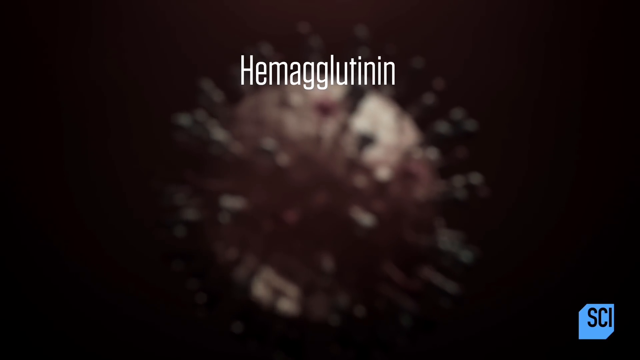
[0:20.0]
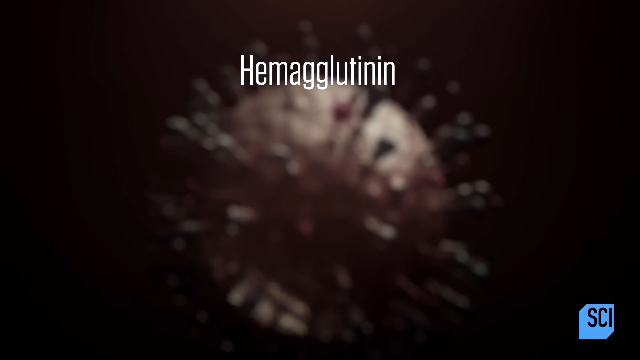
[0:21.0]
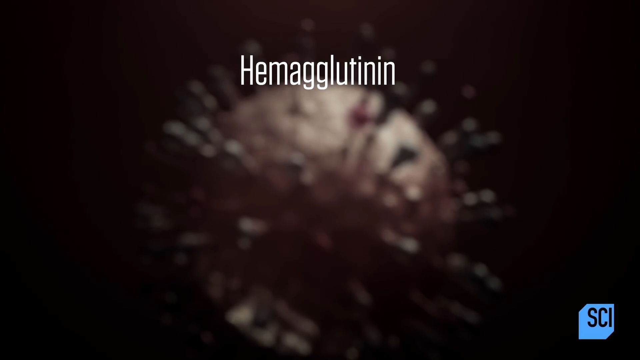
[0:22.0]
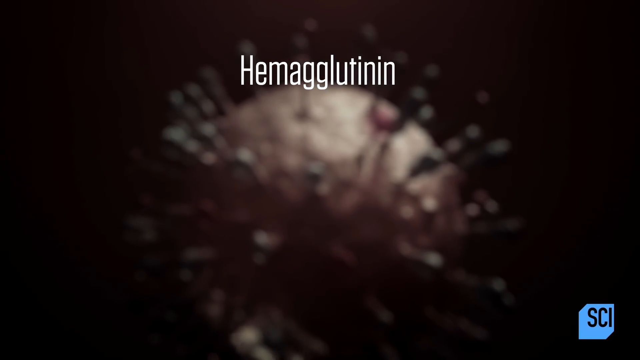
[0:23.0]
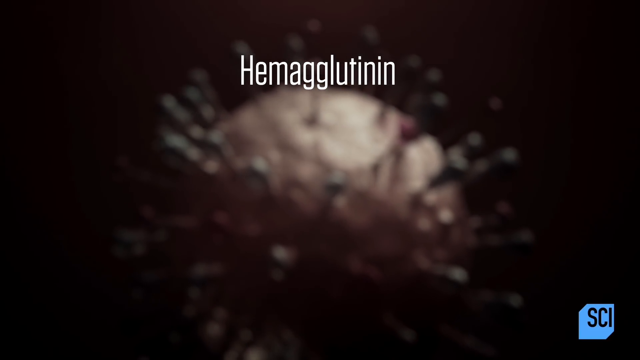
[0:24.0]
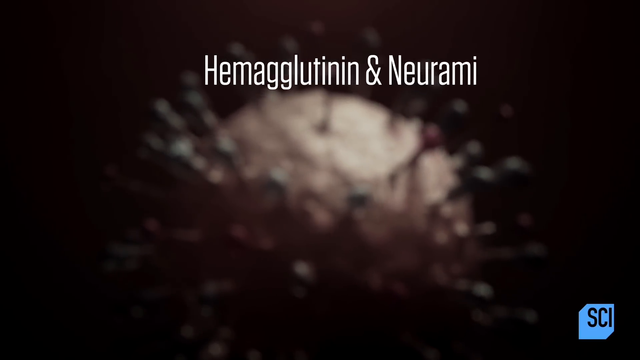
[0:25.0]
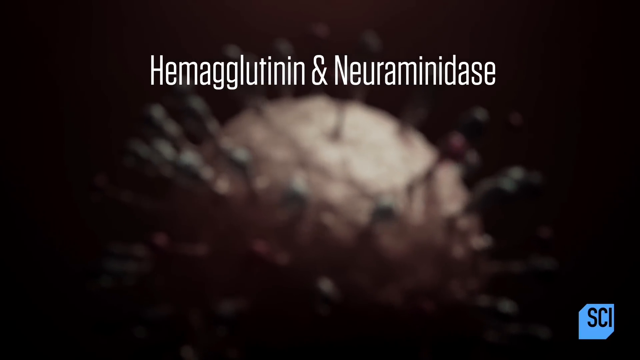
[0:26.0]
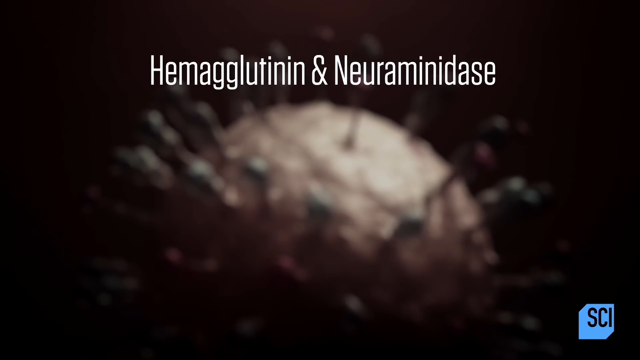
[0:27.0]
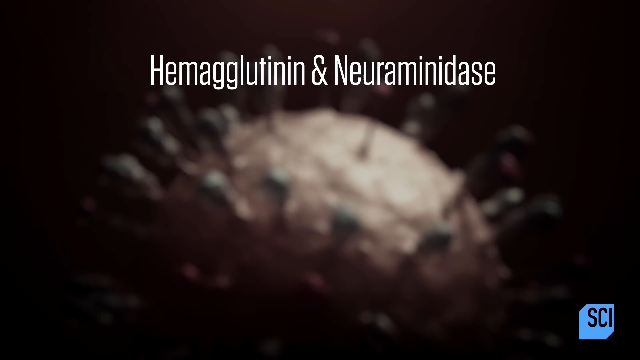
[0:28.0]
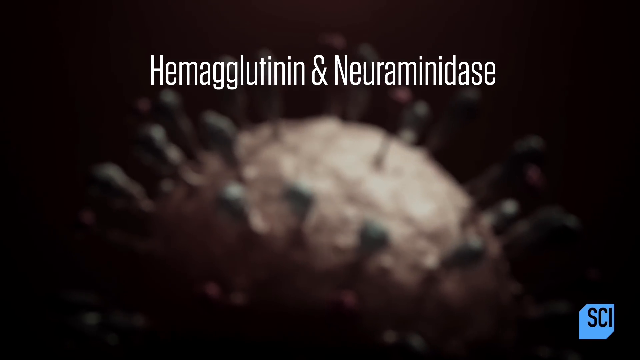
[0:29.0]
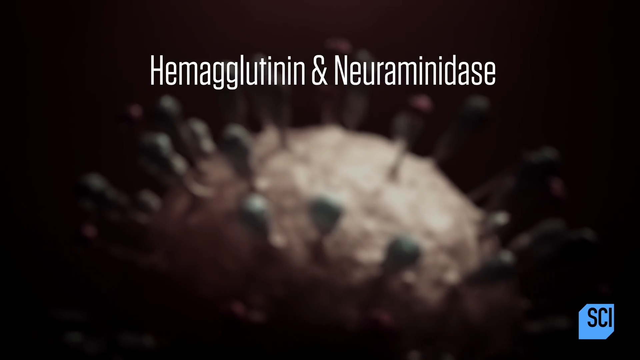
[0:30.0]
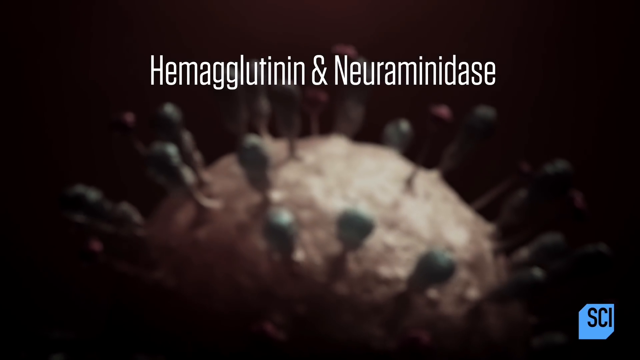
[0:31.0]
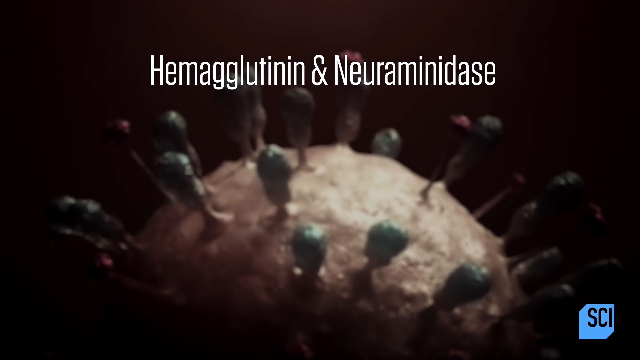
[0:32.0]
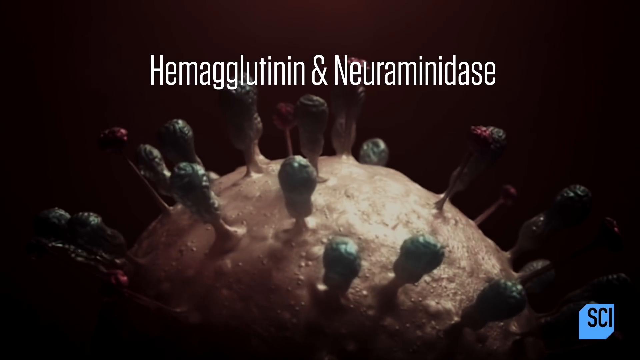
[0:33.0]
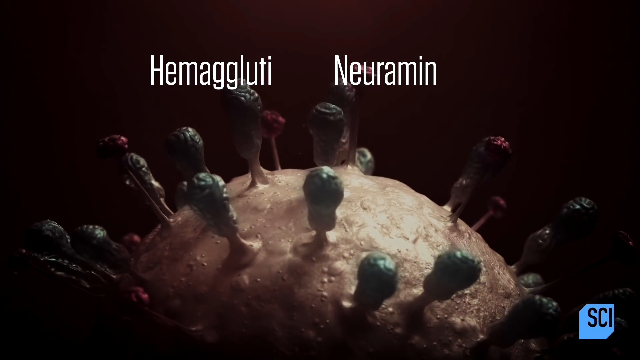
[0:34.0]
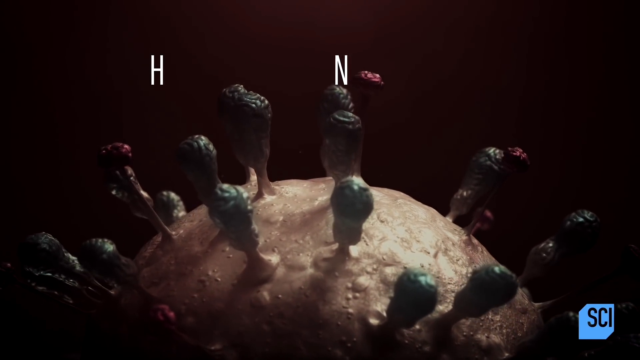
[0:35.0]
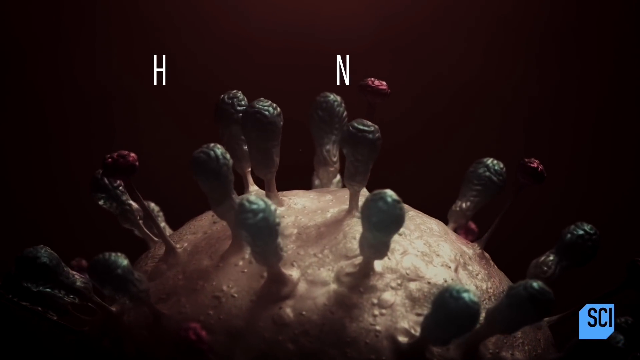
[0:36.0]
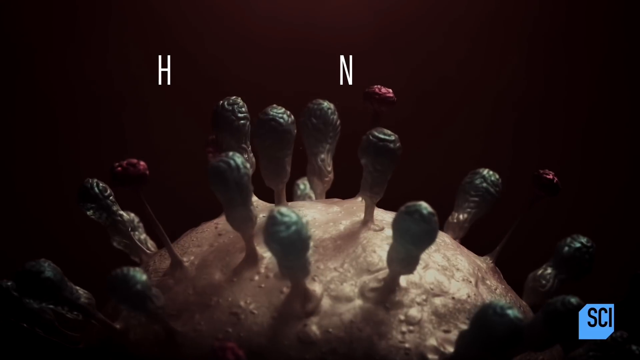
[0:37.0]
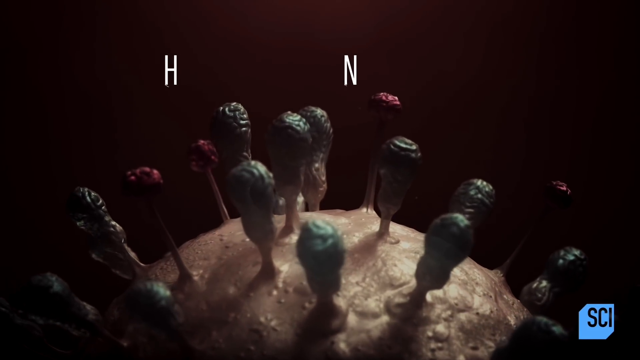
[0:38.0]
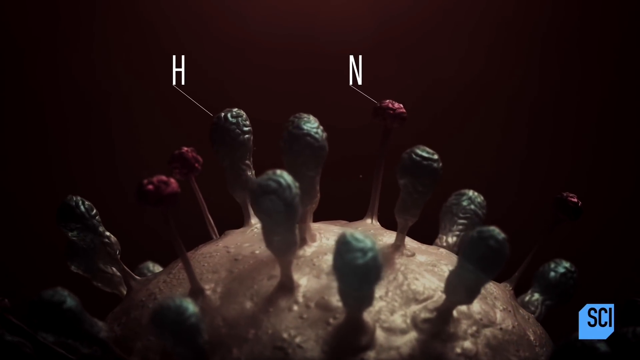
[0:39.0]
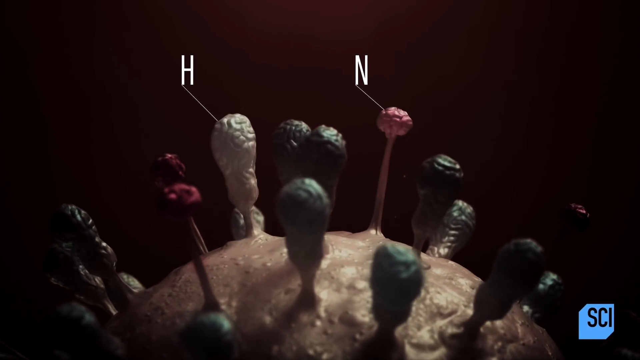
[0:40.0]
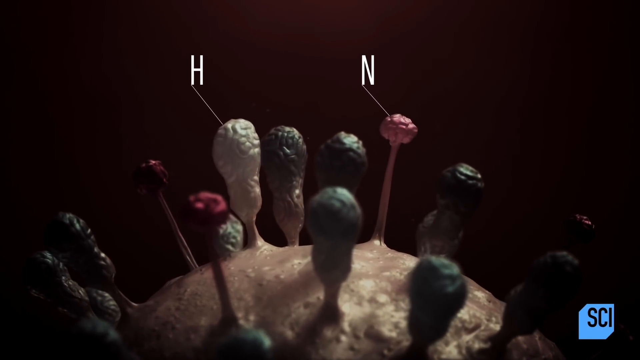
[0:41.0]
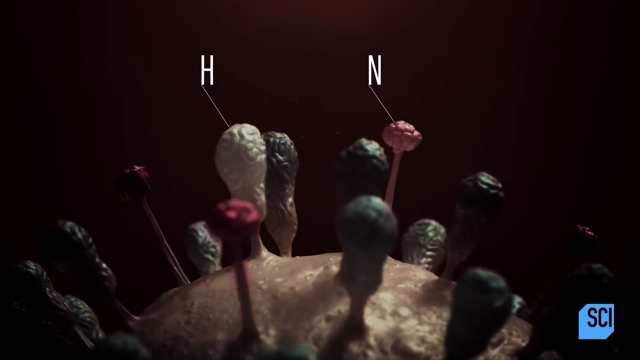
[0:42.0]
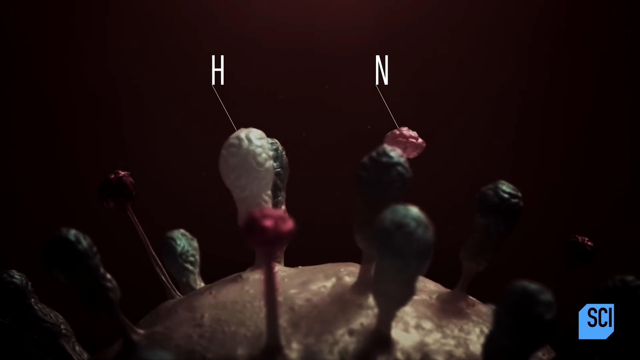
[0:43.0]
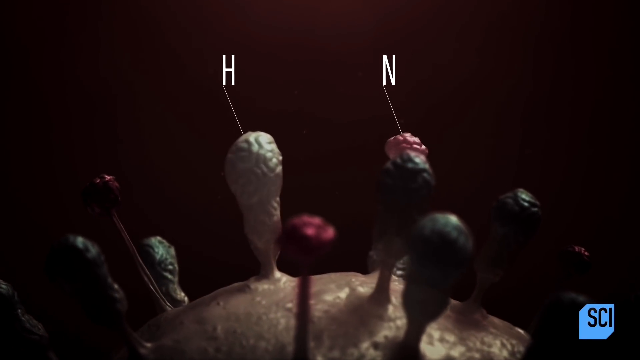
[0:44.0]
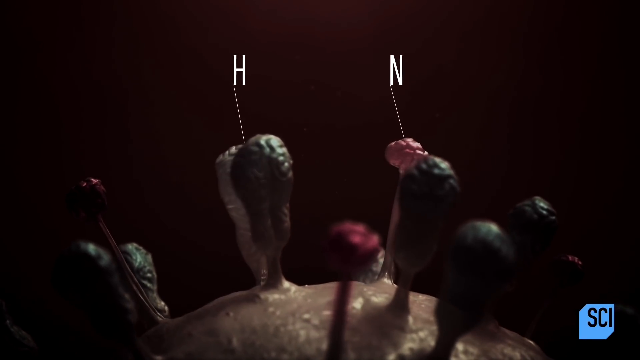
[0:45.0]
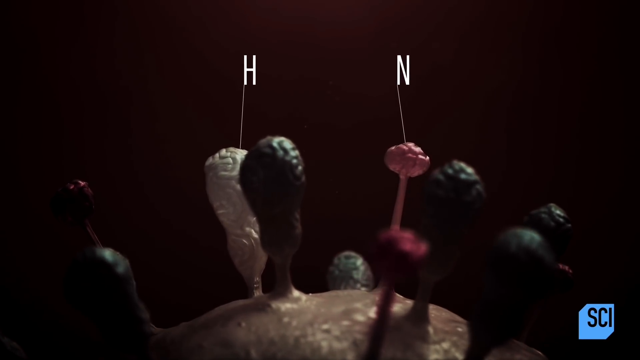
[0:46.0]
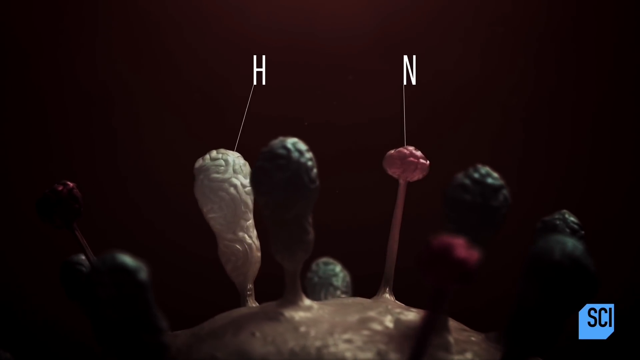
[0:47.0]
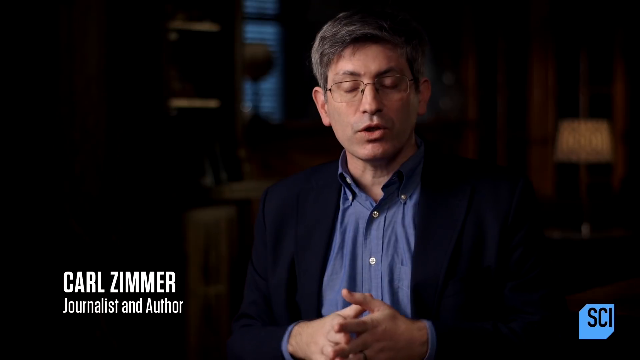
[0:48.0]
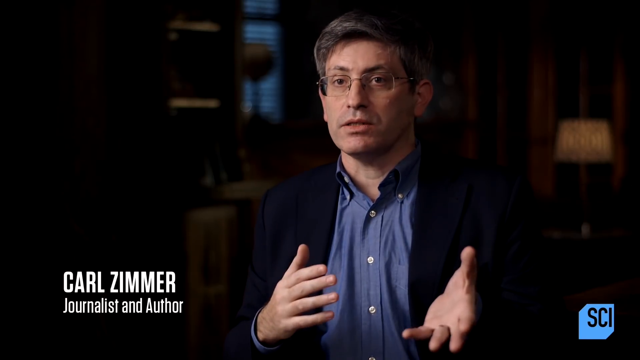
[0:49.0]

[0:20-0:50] A gold, globe-shaped object rotates slowly against a black screen, with the word "hemagglutinin" spelled above it in white. The object comes closer to the camera, revealing that it is covered with spikes extending from it that look like receptors. The text continues as "neuraminidase" appears next to the word "hemagglutinin". As the object comes closer and more clearly into view, the receptors are seen to have two different shapes. The long oval ones are highlighted in green, and the letter "H" appears above them, pointing to one of them. The other receptors are shallower and shorter, with tops that are not as elongated; they are shown in red and labeled with the letter "N". The receptors come closer to the camera and are highlighted in red, gray and white. The video then changes to a man, with text reading "Carl Zimmer, journalist and author". He has graying hair, wire-rimmed glasses, and a black jacket over a blue shirt that is unbuttoned at the collar. He speaks to the camera and gestures with his hands.